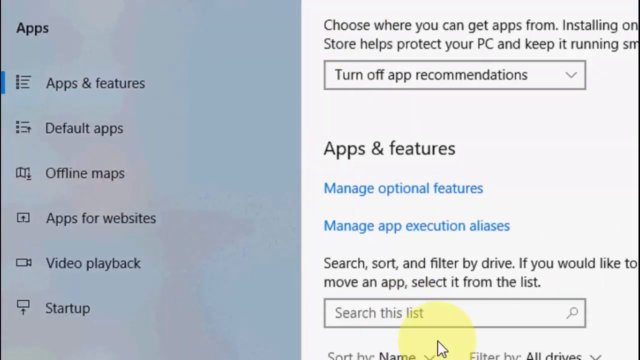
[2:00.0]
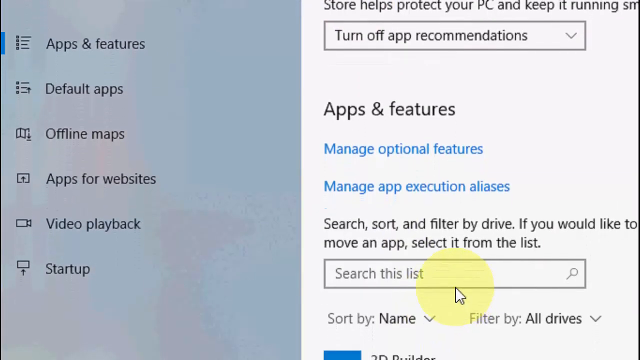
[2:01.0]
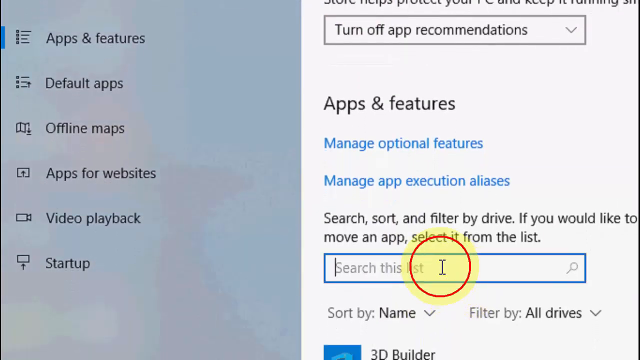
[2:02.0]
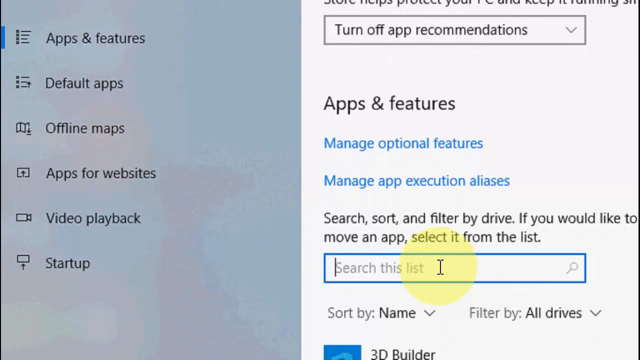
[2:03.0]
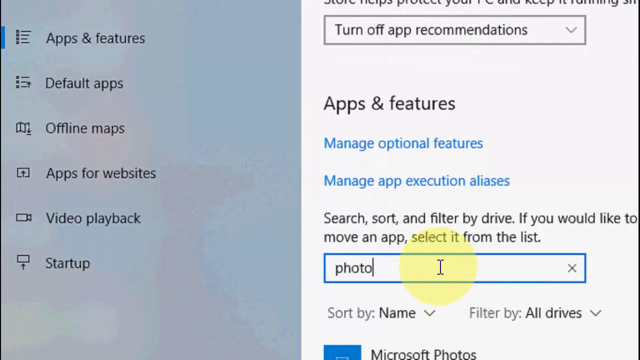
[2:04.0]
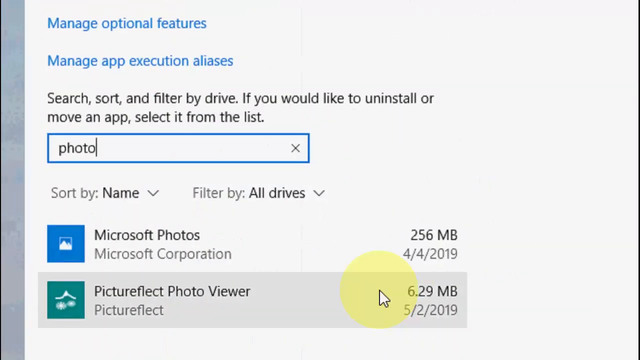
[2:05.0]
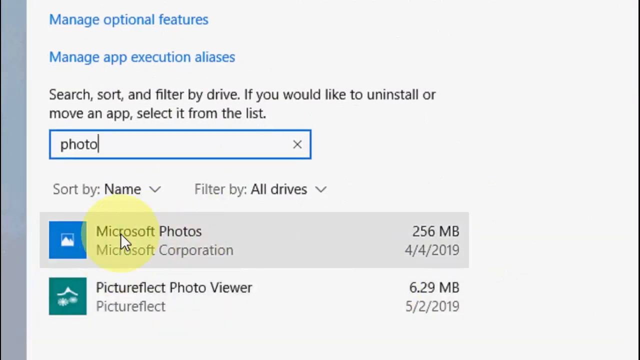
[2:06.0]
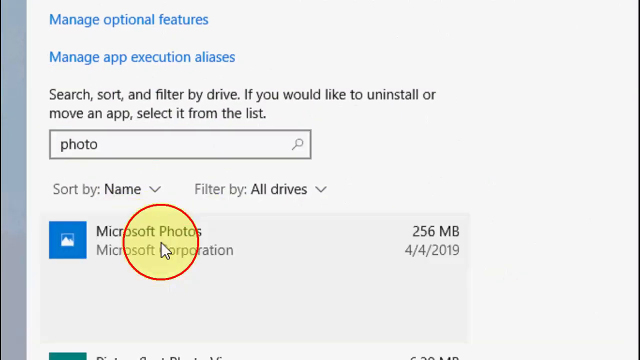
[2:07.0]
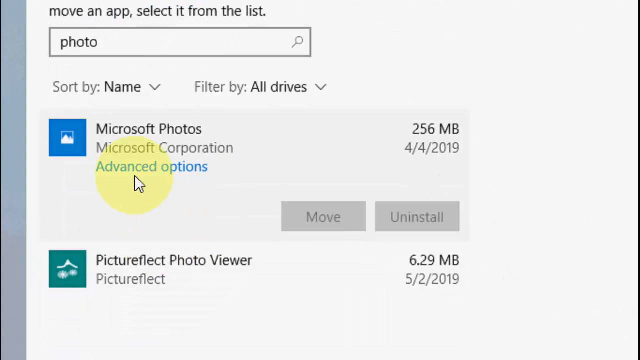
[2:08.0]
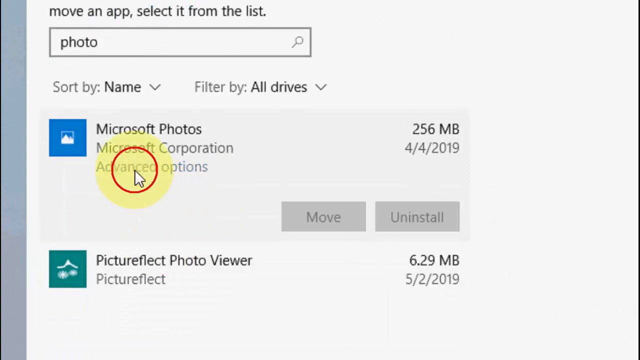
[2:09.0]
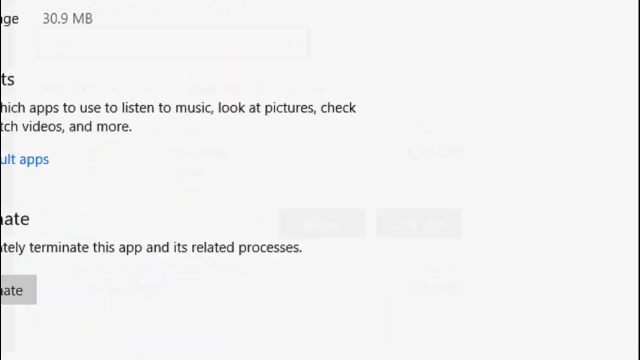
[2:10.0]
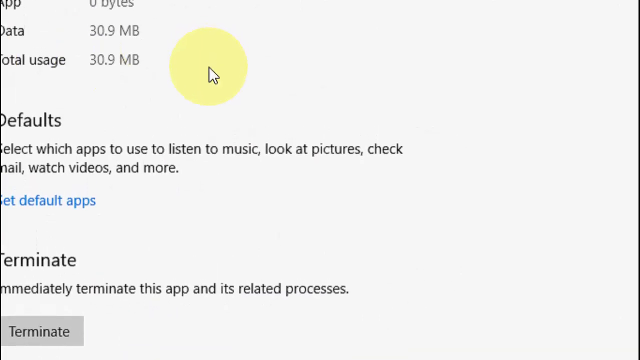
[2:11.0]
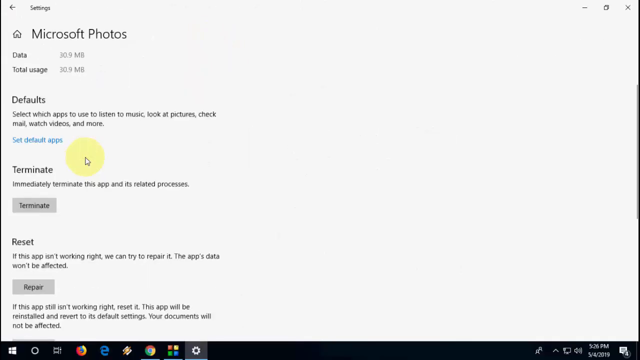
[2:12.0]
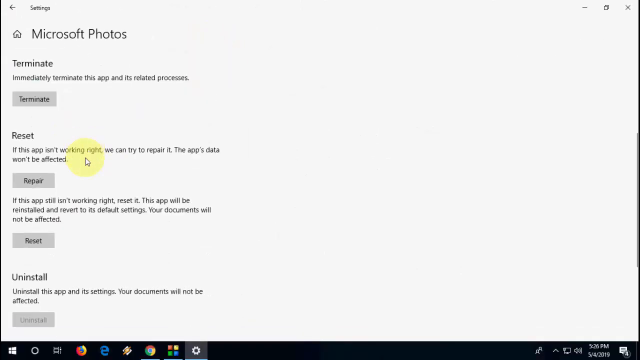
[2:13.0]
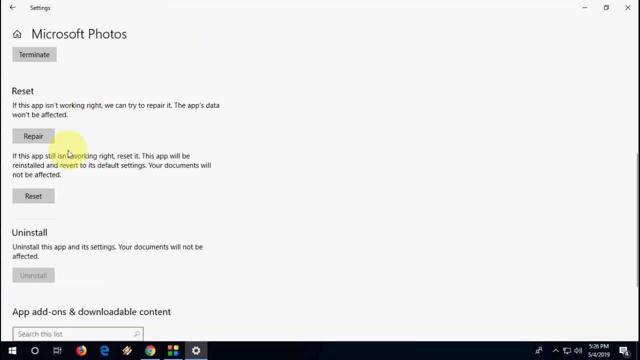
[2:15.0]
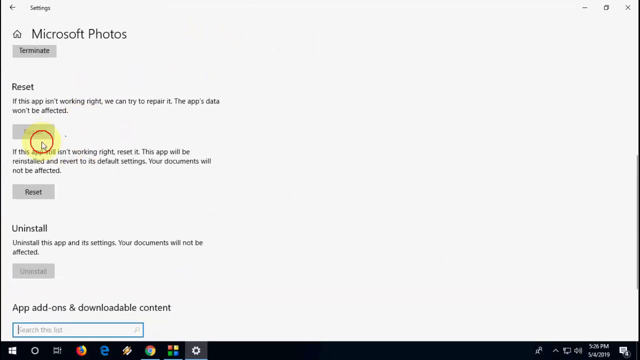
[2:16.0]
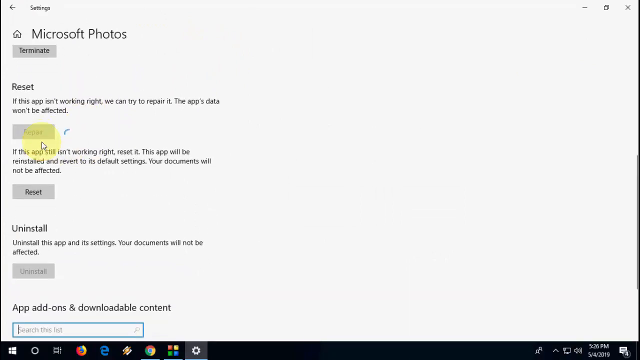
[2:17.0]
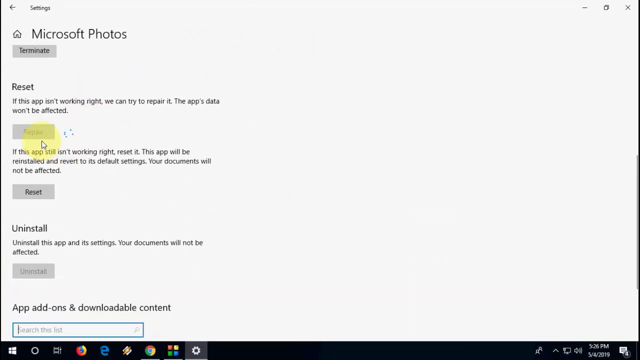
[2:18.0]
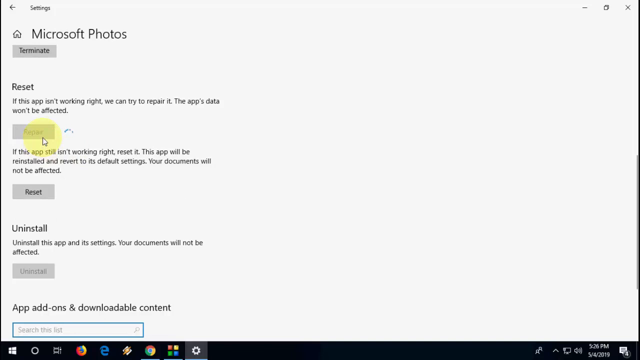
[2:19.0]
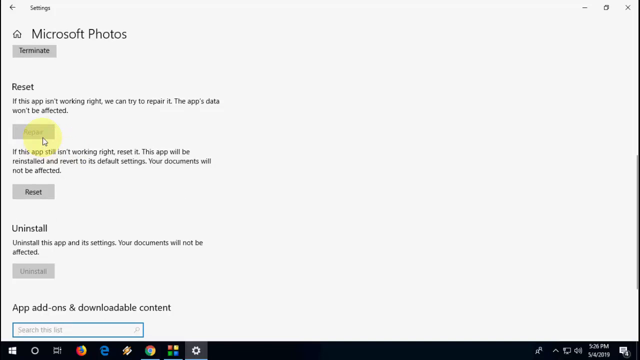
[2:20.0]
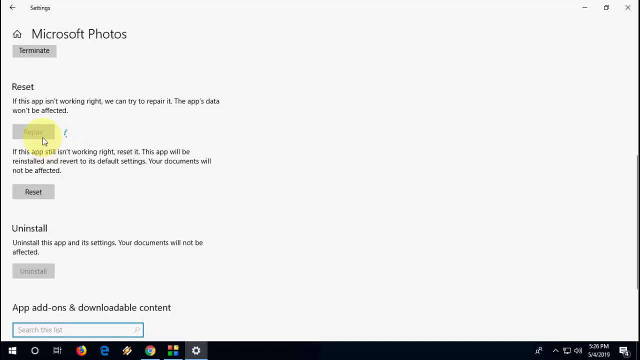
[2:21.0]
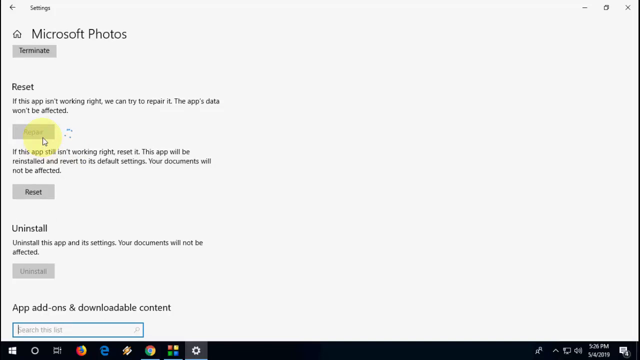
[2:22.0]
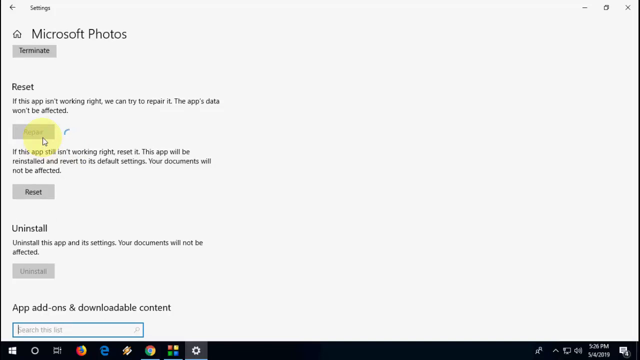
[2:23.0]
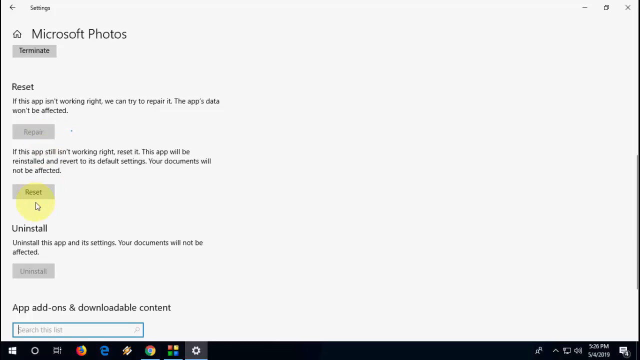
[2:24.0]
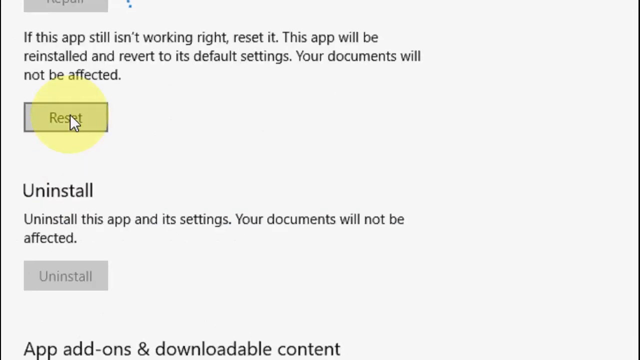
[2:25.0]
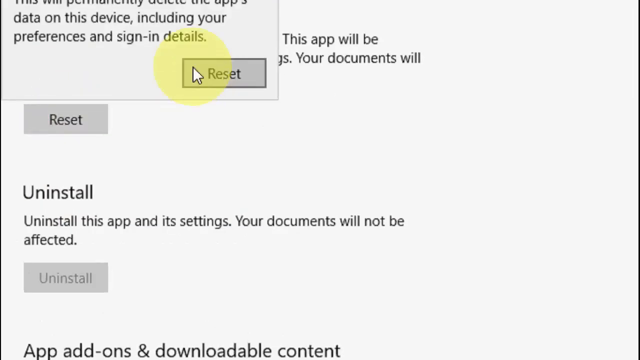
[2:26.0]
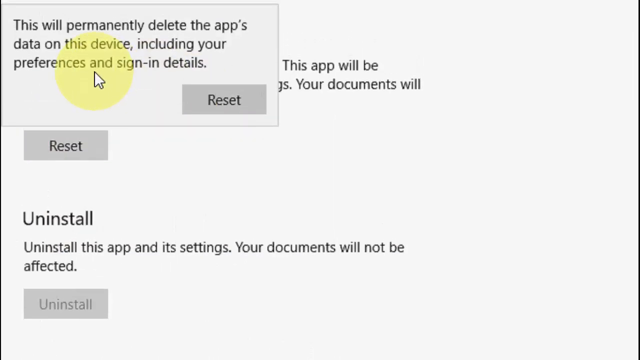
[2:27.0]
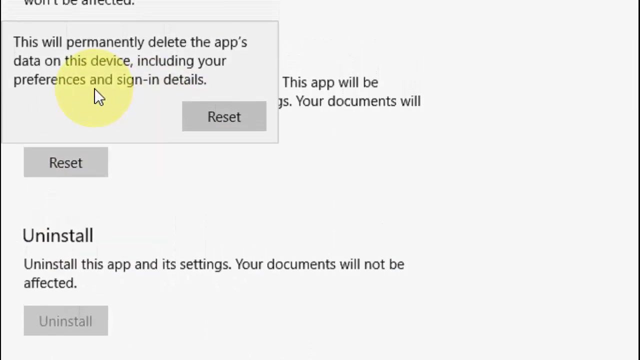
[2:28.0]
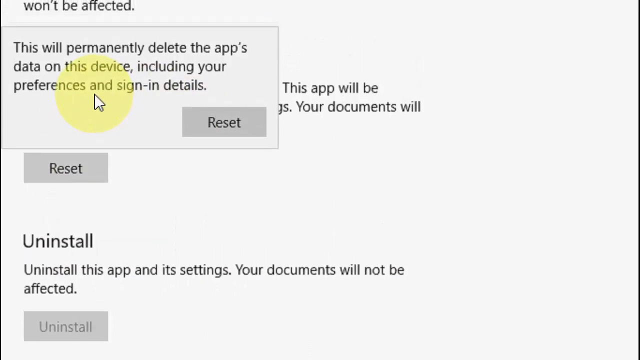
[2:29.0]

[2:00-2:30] The Apps section of Settings is open, listing Apps and Features, Default Apps, Offline Apps, Apps for Websites, Video Playback and Startup, with Apps and Features selected. The user scrolls down and types "Photo" in the search field, and two results appear: Microsoft Photos and Picture Flex Photo Viewer. The user hovers over Microsoft Photos and clicks it, revealing two grayed-out buttons at the bottom right, Move and Uninstall. Beneath the app's name is Advanced Options, a clickable blue text, which the user clicks. Details about Microsoft Photos appear, including Terminate, Repair, Reset and Uninstall. The user scrolls down and clicks the Repair button; the computer loads briefly and circling dots appear to the right of the Repair button. The user then clicks Reset, which brings up the message "this will permanently delete the app's data on this device, including your preferences and sign-in details".